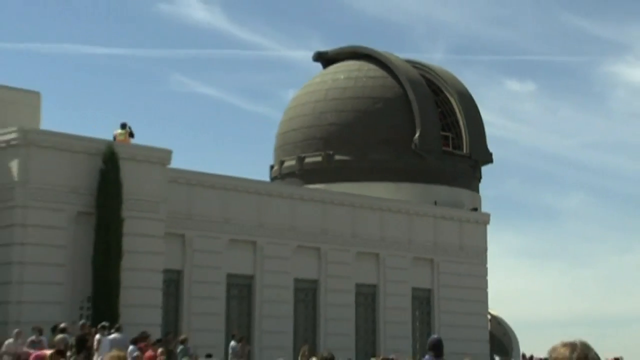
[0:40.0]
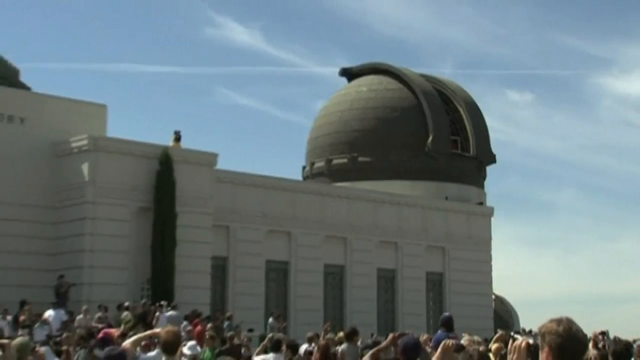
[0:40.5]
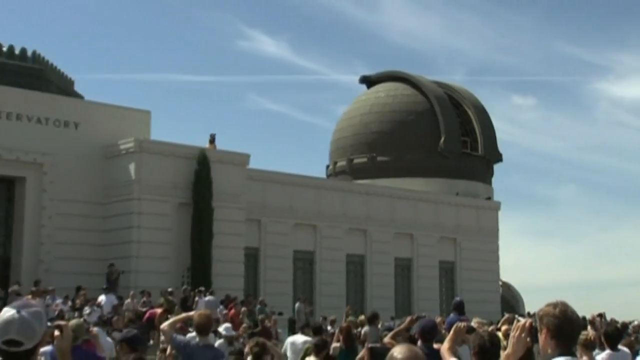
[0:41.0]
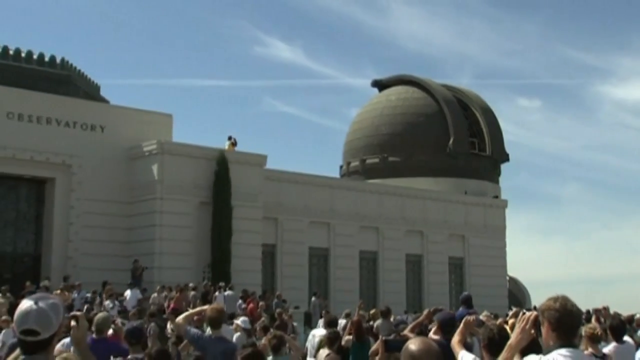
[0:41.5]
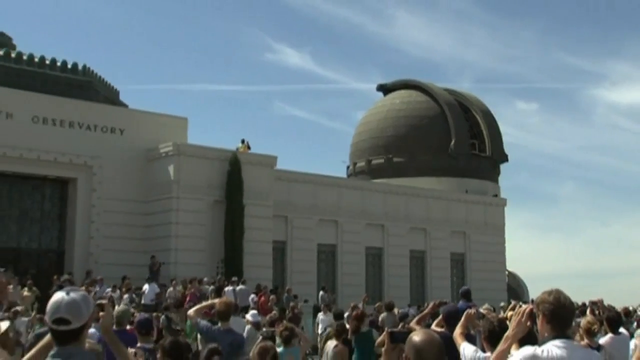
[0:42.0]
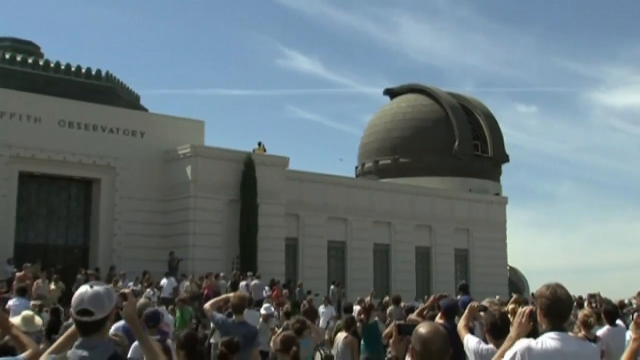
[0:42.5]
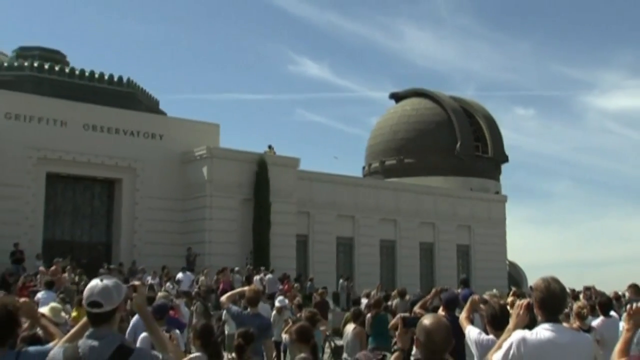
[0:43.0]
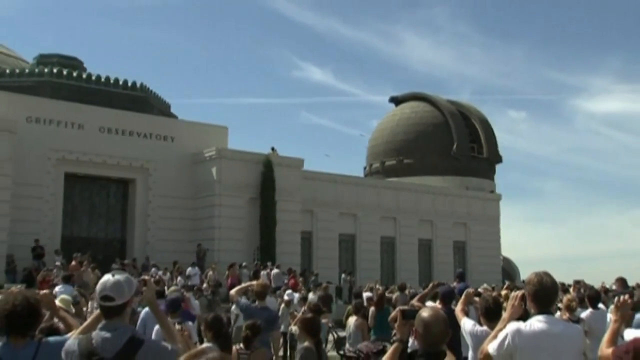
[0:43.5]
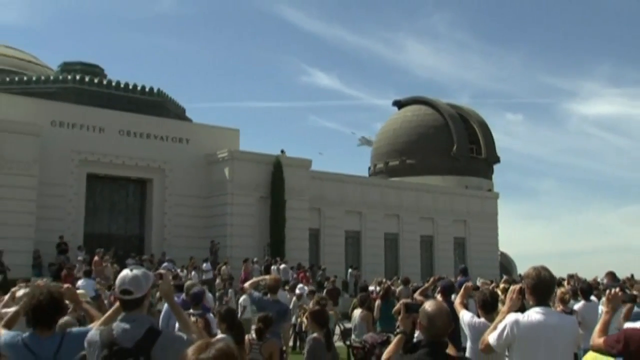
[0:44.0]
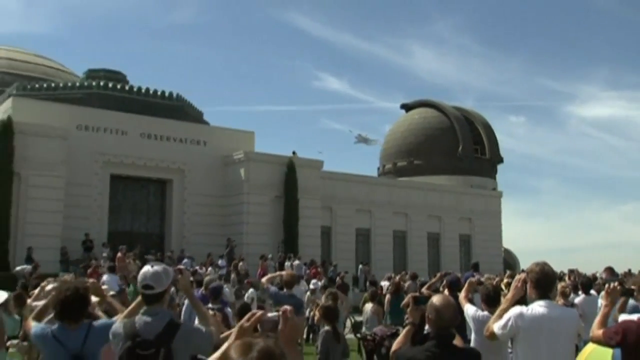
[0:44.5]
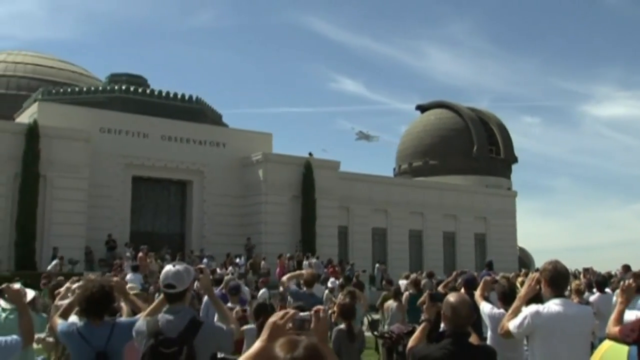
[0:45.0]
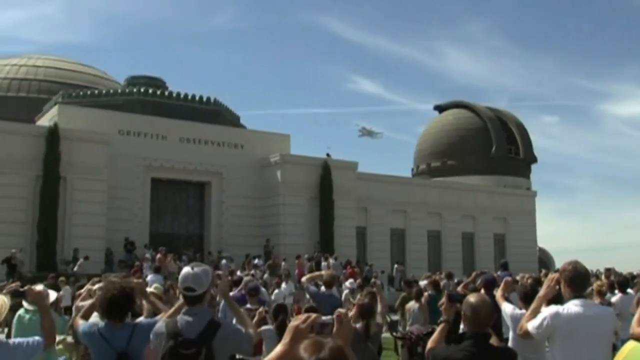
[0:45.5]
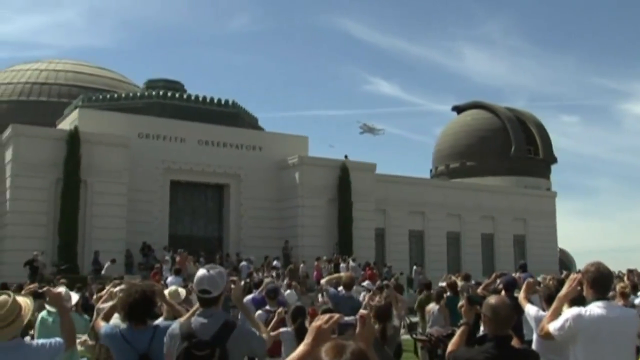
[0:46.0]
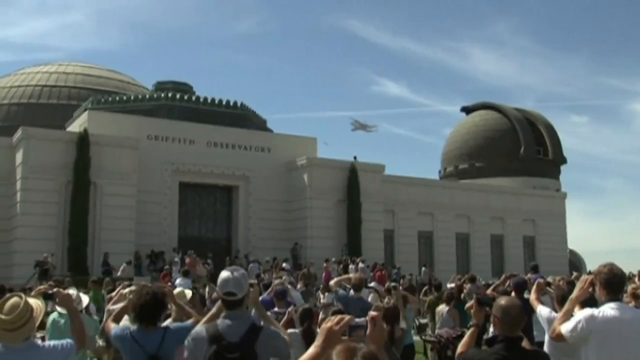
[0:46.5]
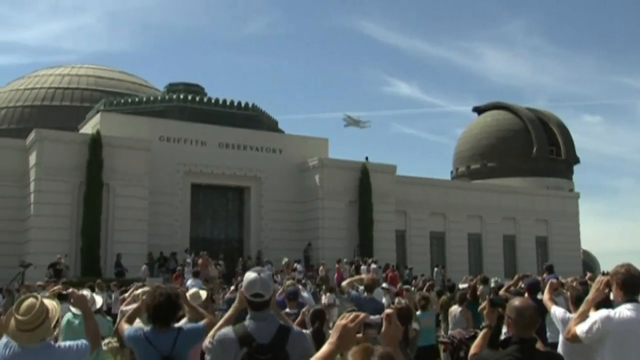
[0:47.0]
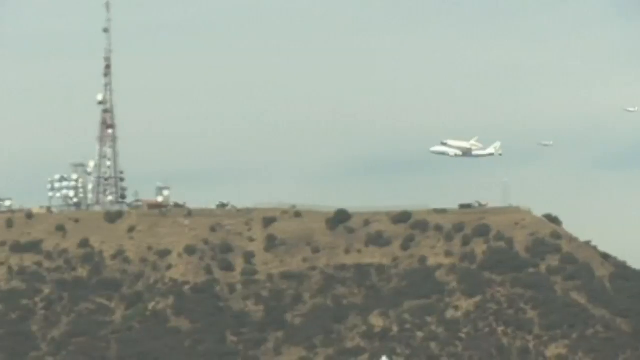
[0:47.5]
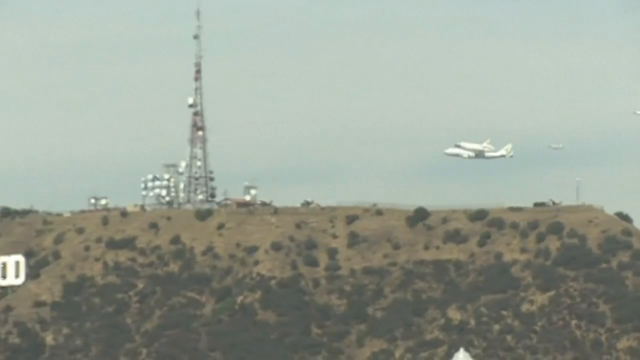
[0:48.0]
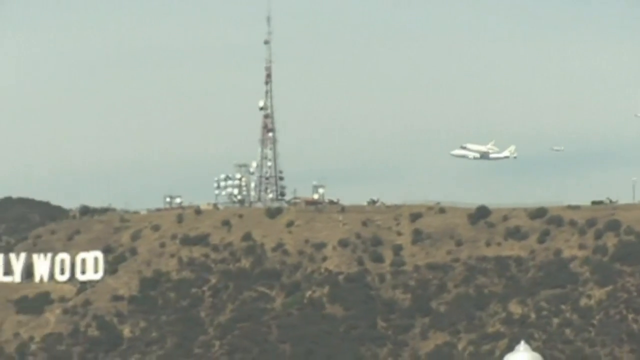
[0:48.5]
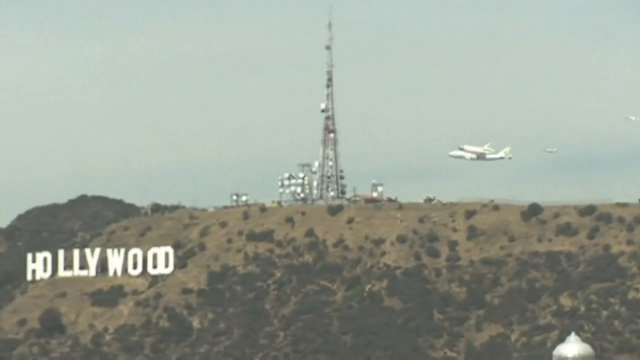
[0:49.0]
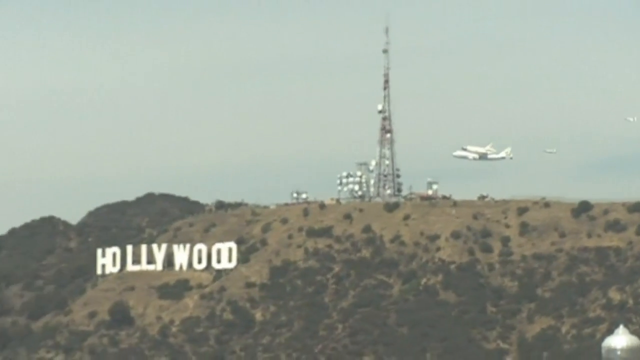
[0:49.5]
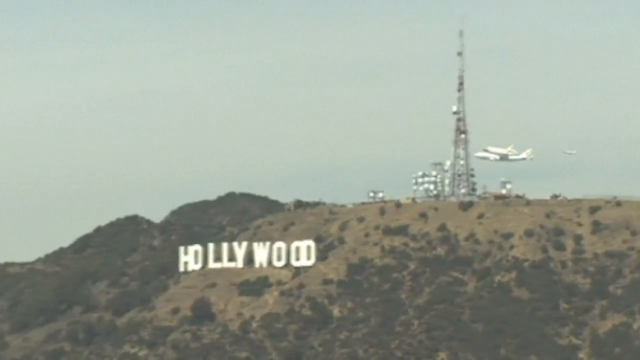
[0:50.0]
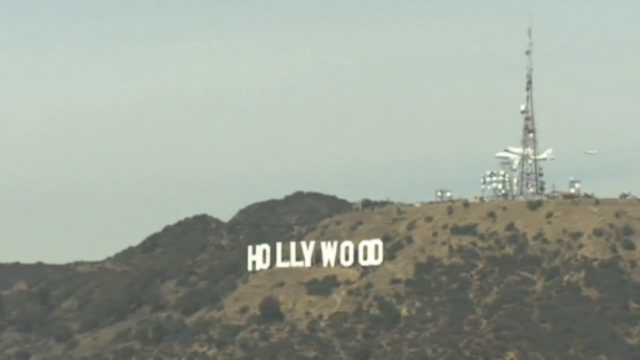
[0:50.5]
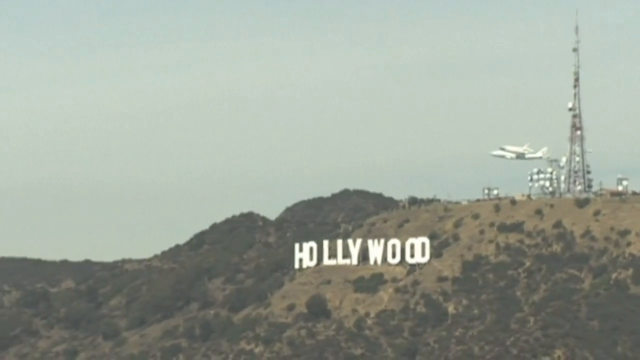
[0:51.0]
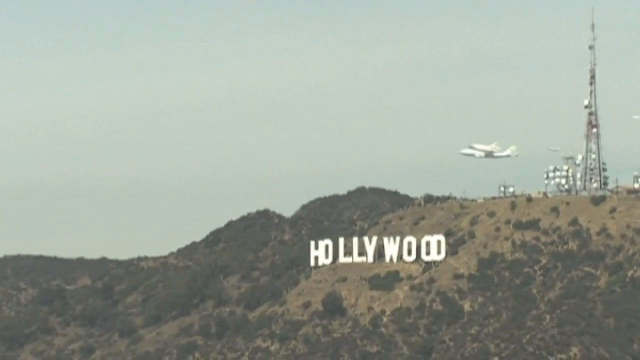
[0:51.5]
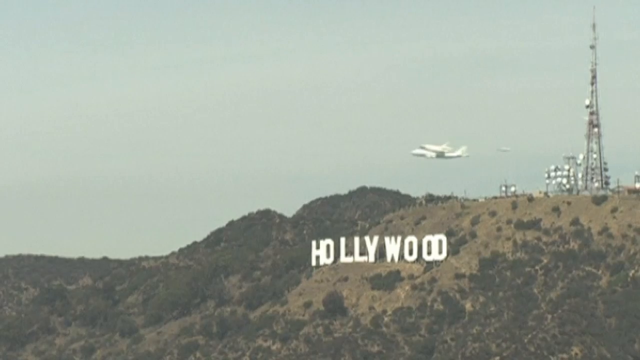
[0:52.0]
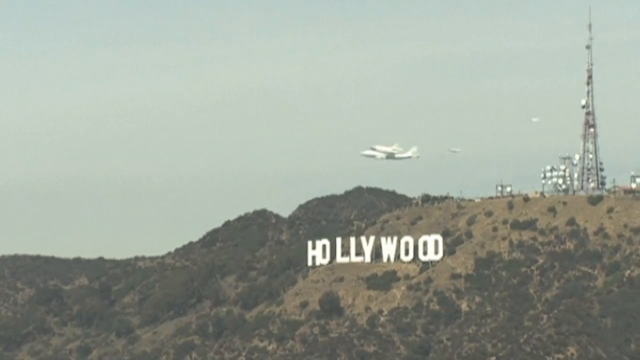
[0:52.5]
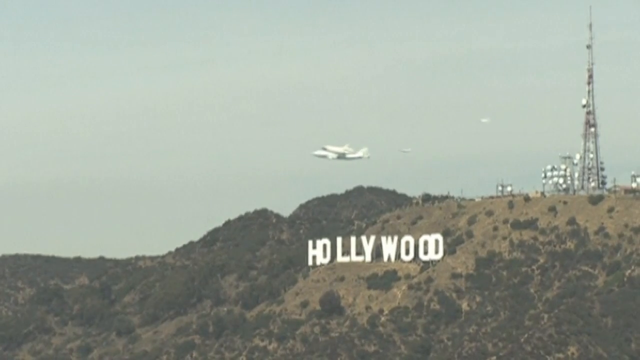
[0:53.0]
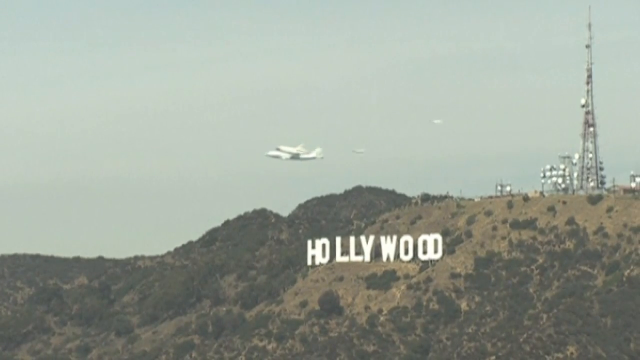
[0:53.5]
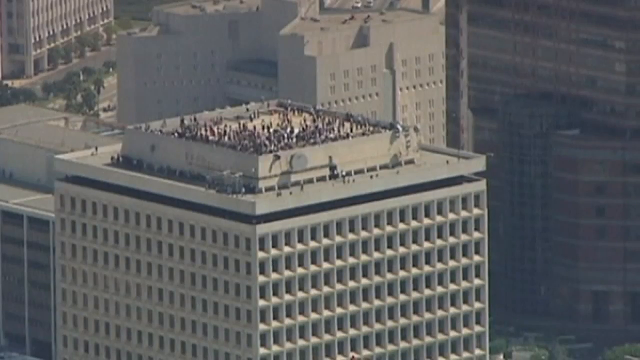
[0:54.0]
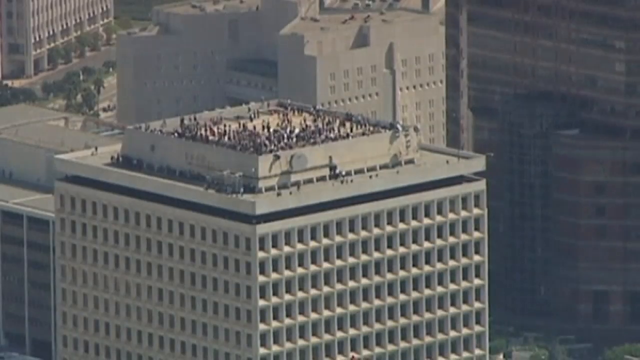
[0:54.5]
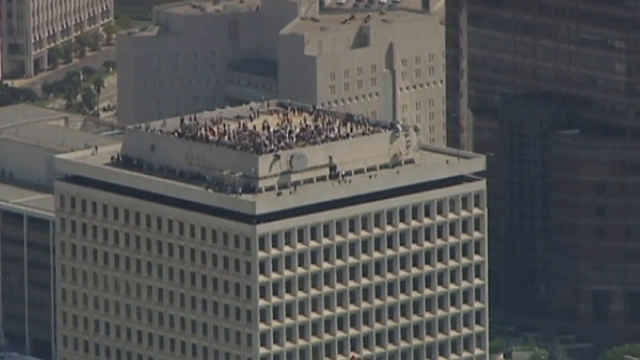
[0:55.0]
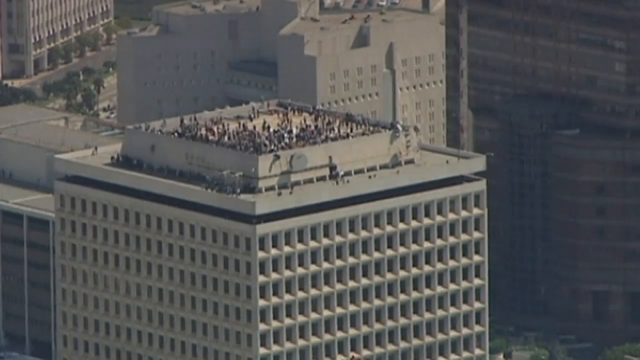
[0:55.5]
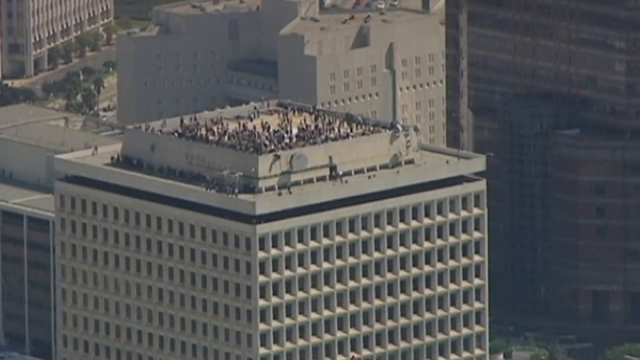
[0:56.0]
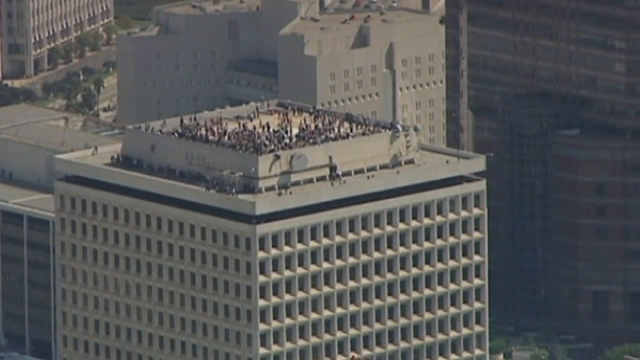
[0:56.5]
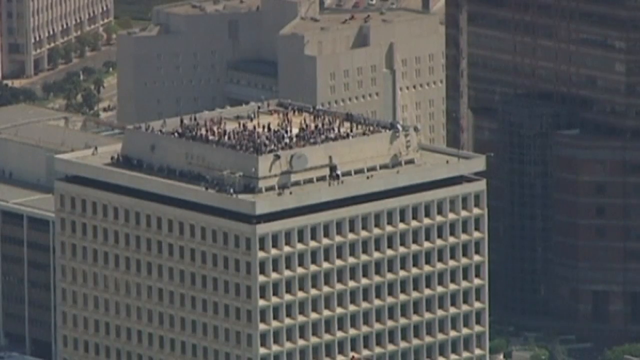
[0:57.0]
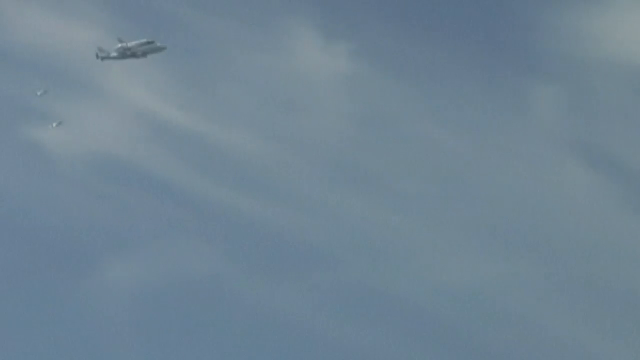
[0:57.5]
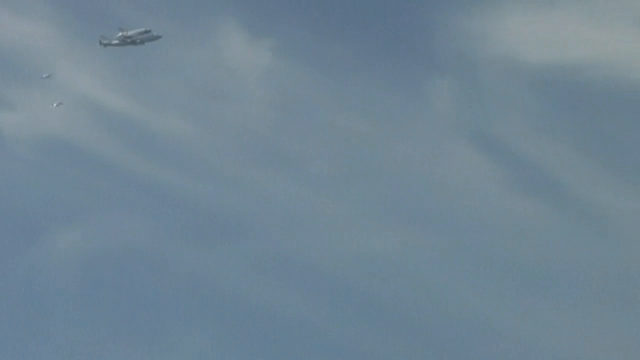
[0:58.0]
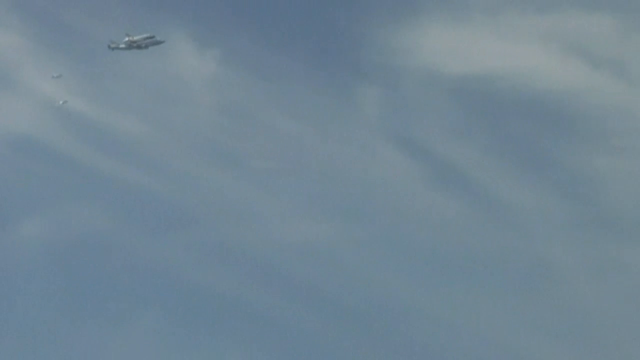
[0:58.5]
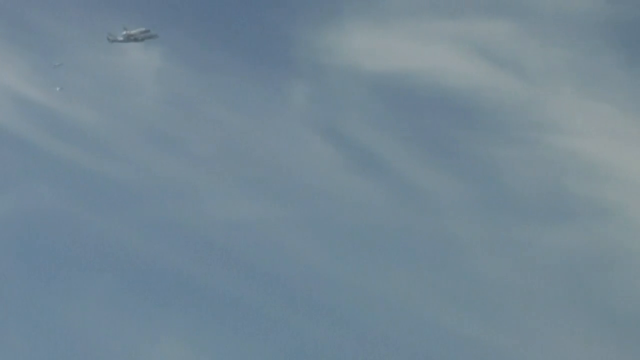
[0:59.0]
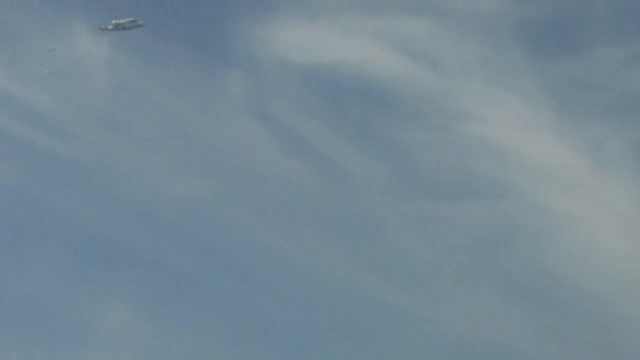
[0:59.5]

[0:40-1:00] The building is white with tall vertical windows, and its rooftop rises in three different spots. The planetarium-like dome is a darker brown, with two curved ridges on either side of the opening, which apparently retracts on a track. Somebody on the roof appears to be videotaping, arms bent and looking up. A large single hedge is below them on the ground, ever so slightly visible. The side of the building says "Griffin Observatory". A bunch of people are looking up and watching the sky and taking photos, most of them in ball caps, of all ages and different ethnicities. The view then moves over Hollywood, with the space shuttle flying over different areas. It passes a large tower, possibly a phone tower, flying pretty low. The Hollywood sign is visible on the hillside with trees, and two airplanes are still following behind the shuttle. A large gathering is on top of a large multi-leveled building.